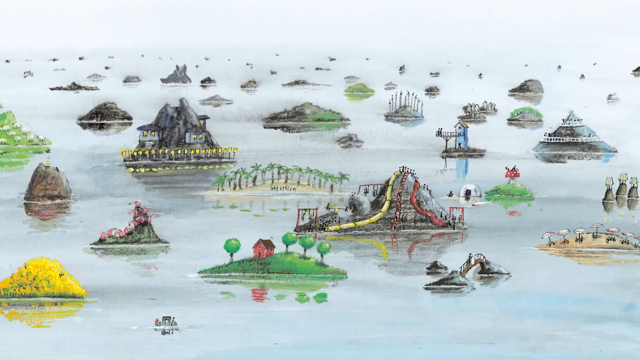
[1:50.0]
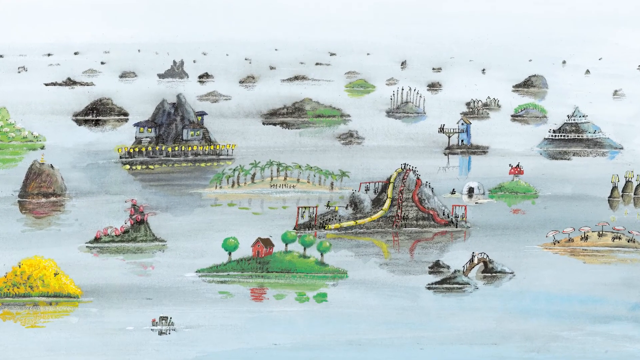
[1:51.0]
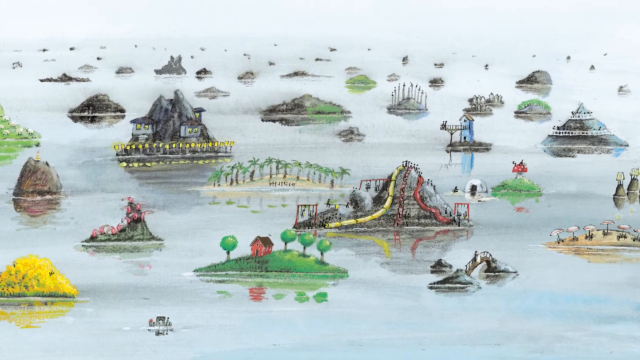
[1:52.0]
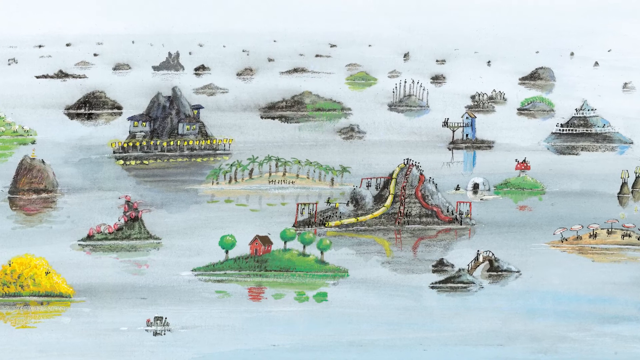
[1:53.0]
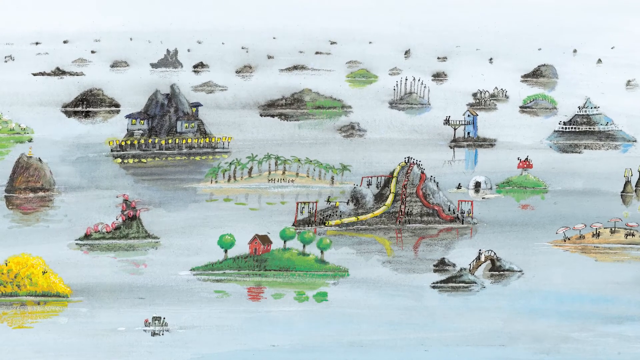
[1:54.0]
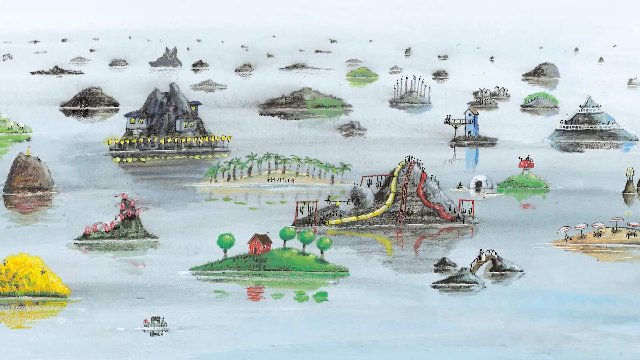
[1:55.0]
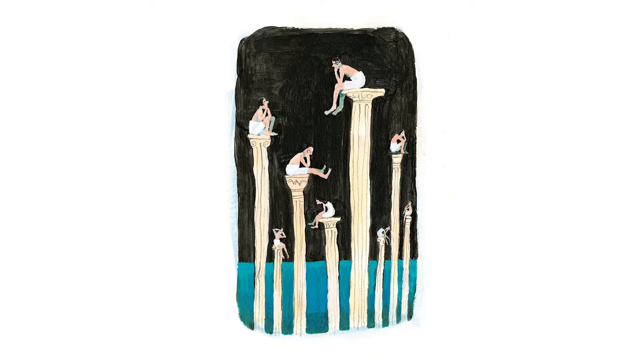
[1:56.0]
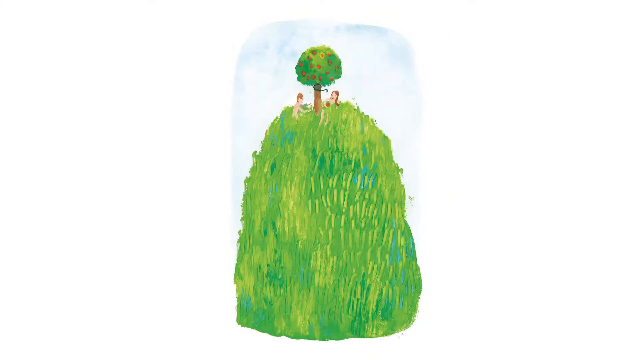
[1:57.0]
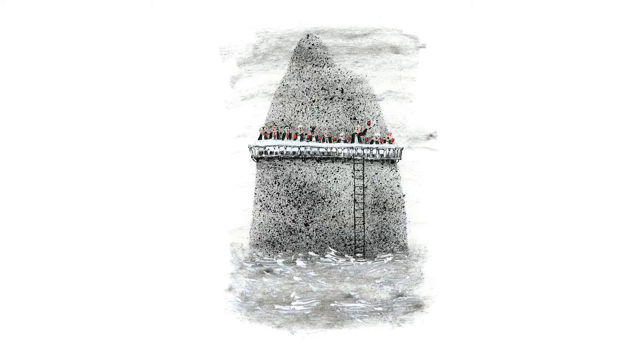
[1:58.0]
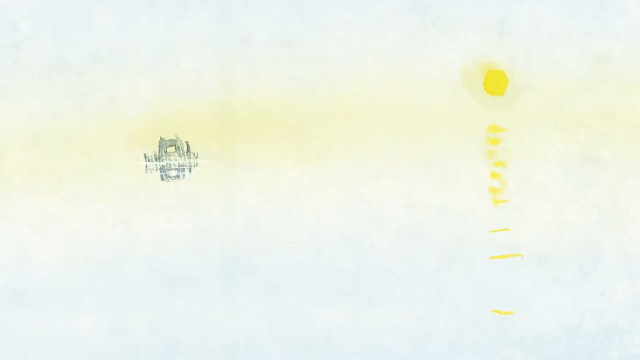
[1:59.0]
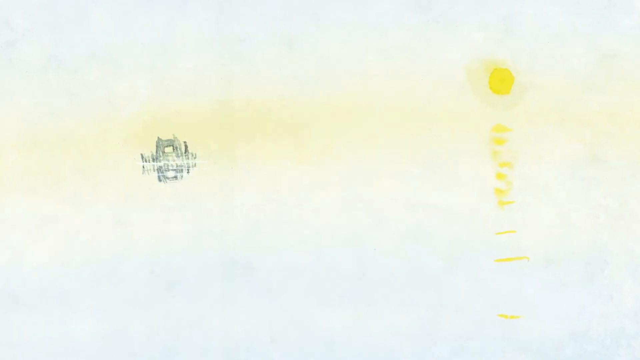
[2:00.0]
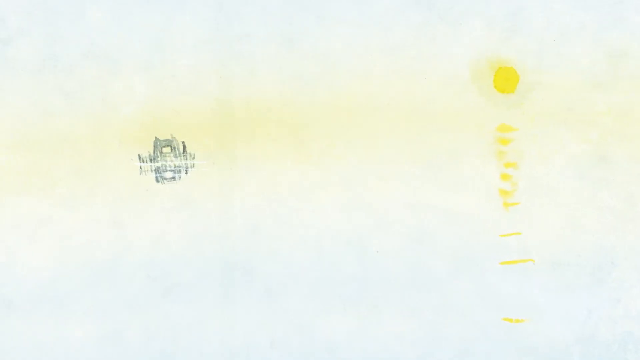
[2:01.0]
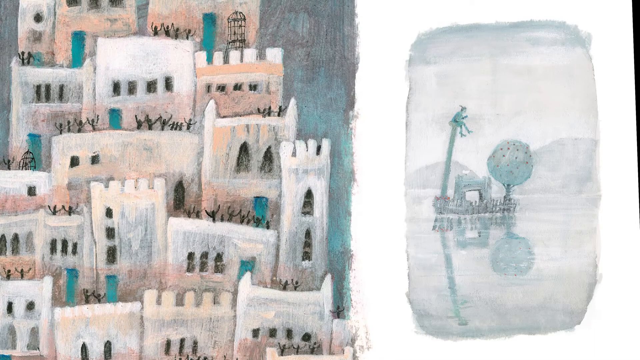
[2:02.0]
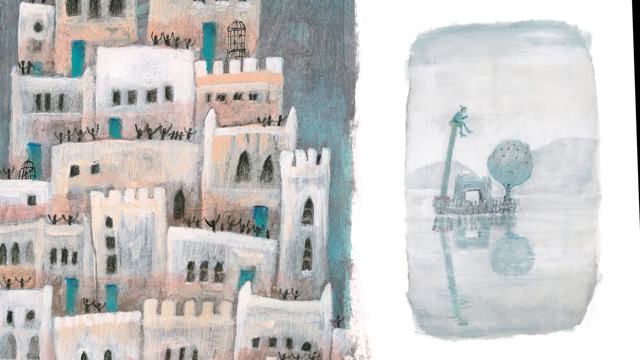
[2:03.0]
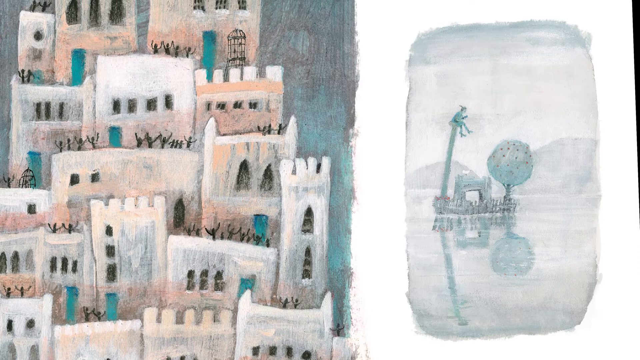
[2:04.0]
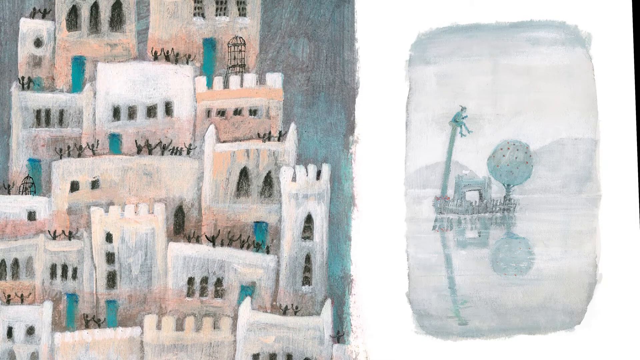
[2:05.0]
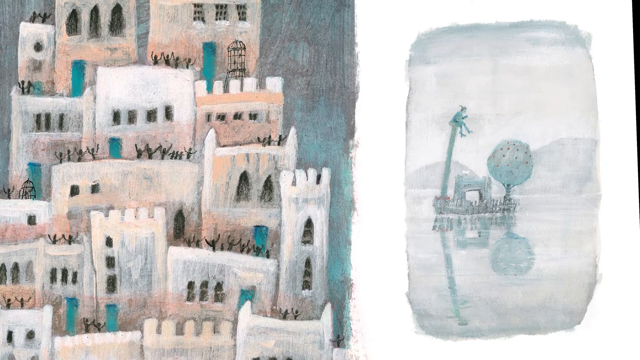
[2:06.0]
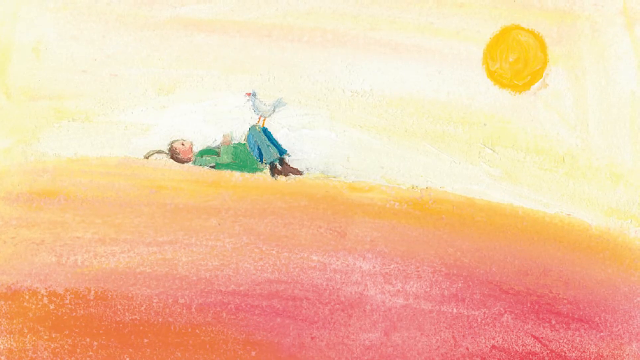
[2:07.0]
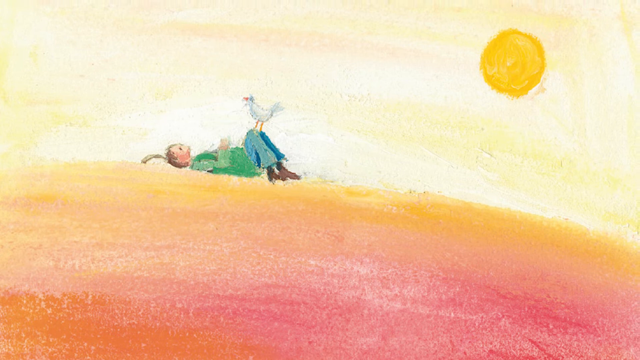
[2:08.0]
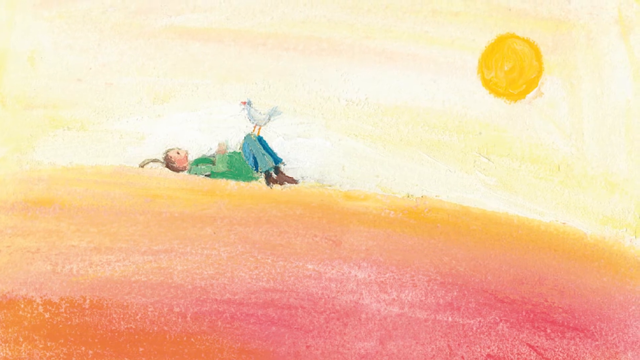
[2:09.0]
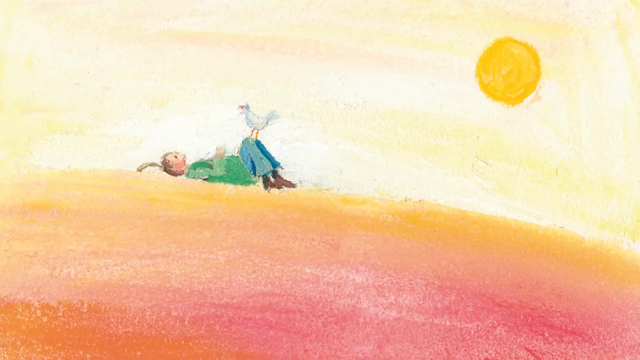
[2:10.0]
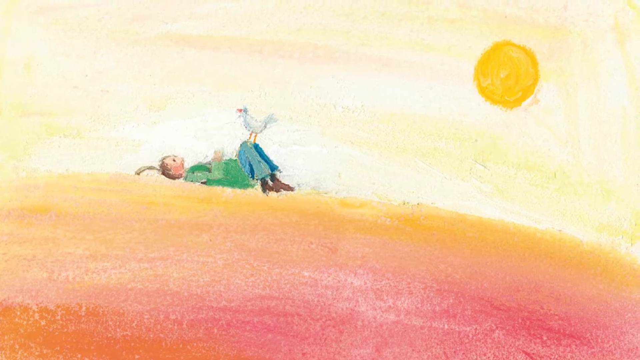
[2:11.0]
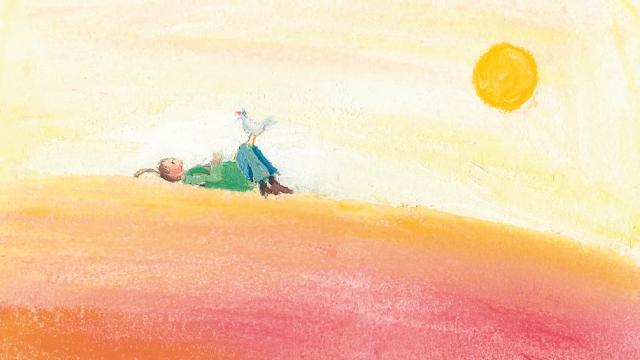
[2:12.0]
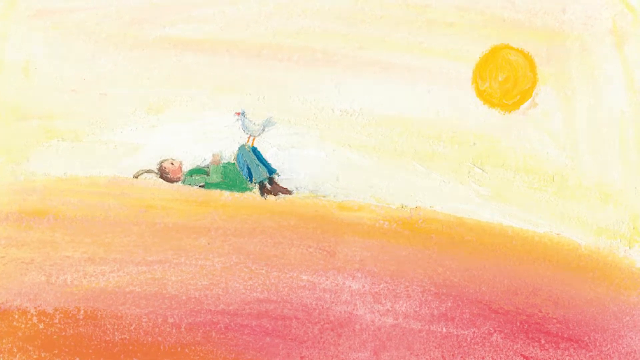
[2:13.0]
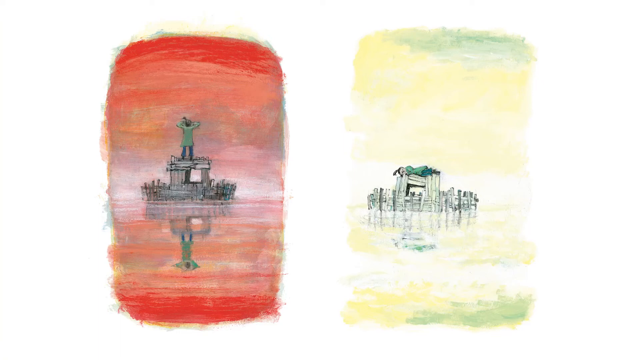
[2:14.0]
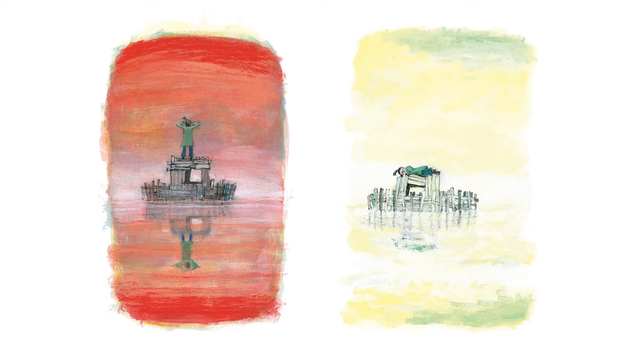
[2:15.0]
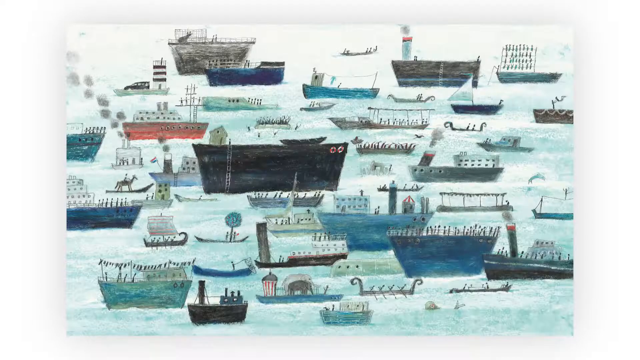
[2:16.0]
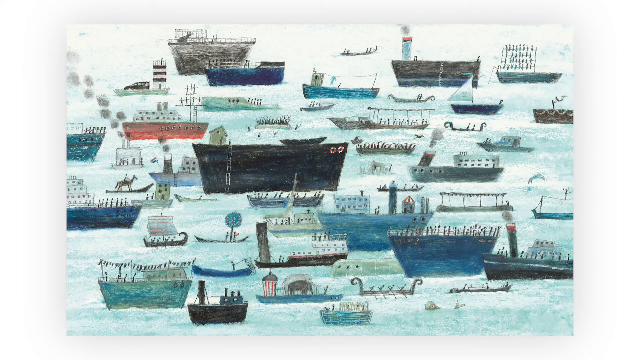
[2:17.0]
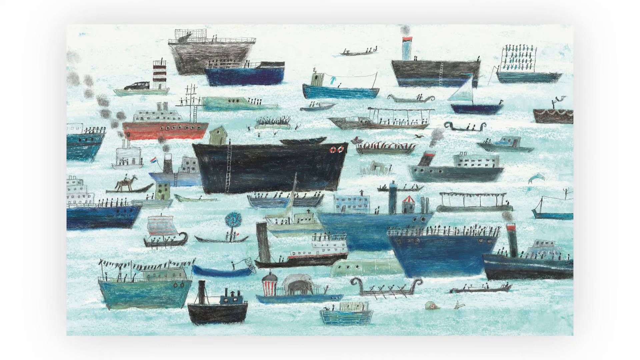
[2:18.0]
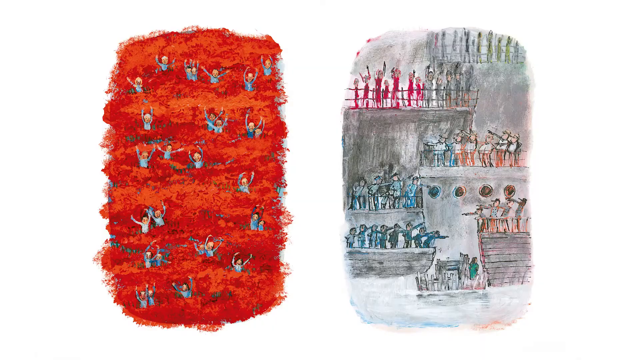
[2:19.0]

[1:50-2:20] An image shows many small islands, each with something different going on: one looks like a water slide and some look like homes, all very whimsical. The next image shows people in togas sitting at the very top of what look like Roman columns; most of them look like they are reflecting on life. After that comes an enormous hill with a depiction of an apple tree, a snake, and Adam and Eve at the very top; they are partly covered by the grass, so they are only visible from the shoulders up. Another image shows a ramshackle little houseboat on the water, almost completely white, with a little yellow sun. Two more images follow: the one on the left looks like a village in Italy where the houses are built on top of each other and everyone stands on their balconies waving; the one on the right shows a person on a tall column on their little ramshackle houseboat, along with the apple tree from the scene with Adam and Eve. The next image, in reds, oranges and peach, shows a girl lying on her back with her knees up and a little white bird perched on her knees. Another image in the same warm red and orange hues shows the same girl standing on top of her little ramshackle houseboat. The next image shows roughly the same scene of the houseboat, this time with the girl lying on top of it, in colours more like light yellow and green. Then an image shows many different ships and boats of all kinds, drawn in a somewhat cartoonish way and going in all different directions; there are probably about 20 of them. Next, people in an orange field look like they are dancing with their arms up. Then another image shows sailors on different boats, all pointing in different directions.